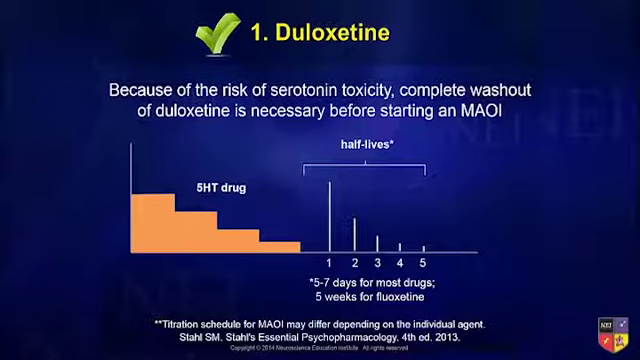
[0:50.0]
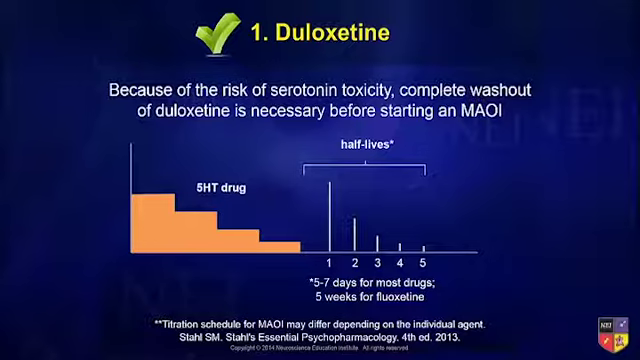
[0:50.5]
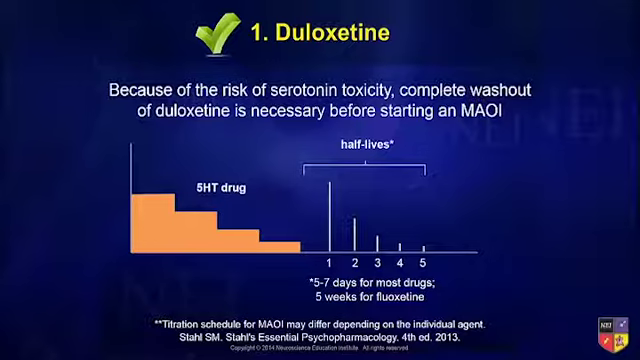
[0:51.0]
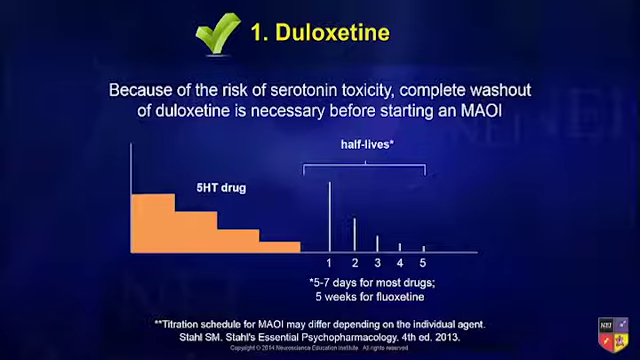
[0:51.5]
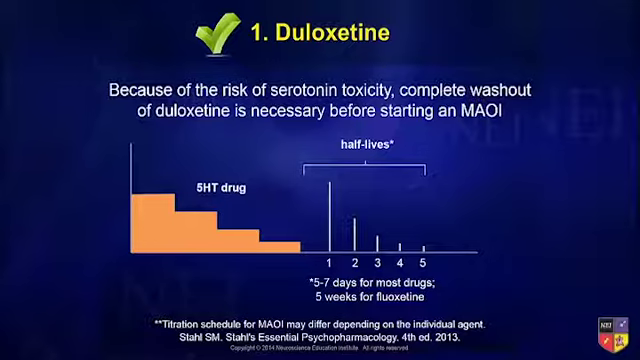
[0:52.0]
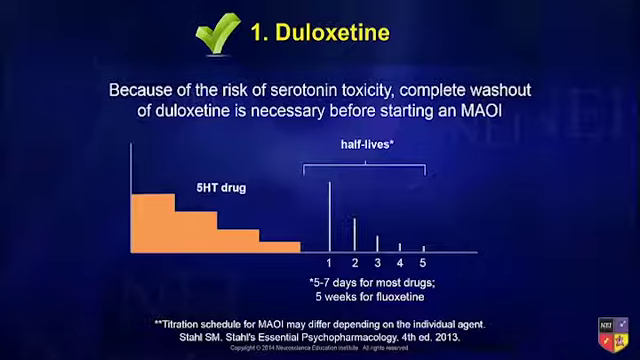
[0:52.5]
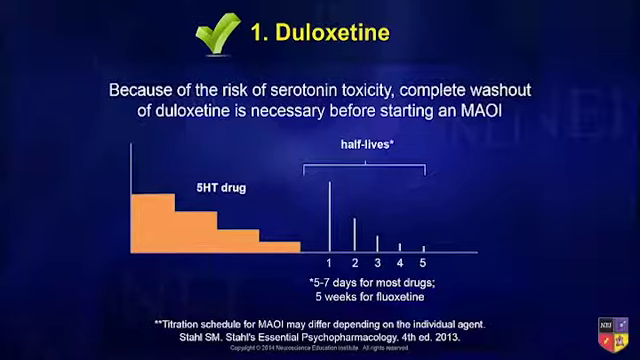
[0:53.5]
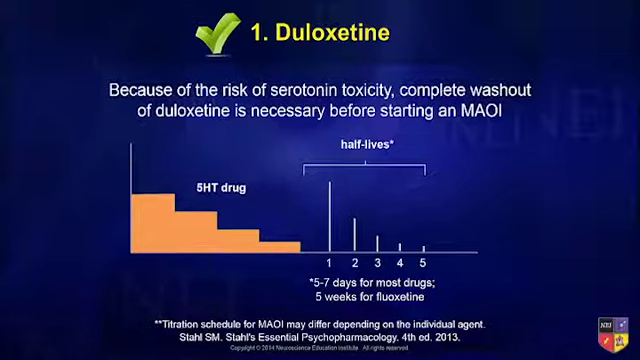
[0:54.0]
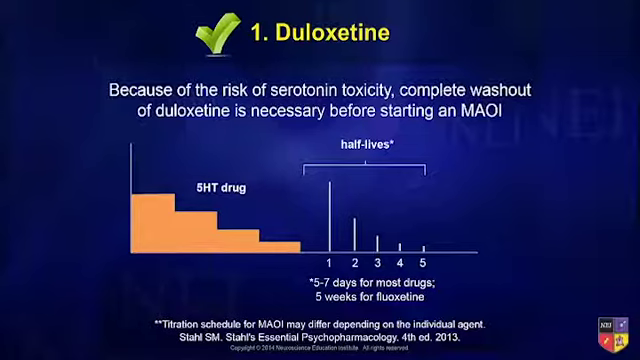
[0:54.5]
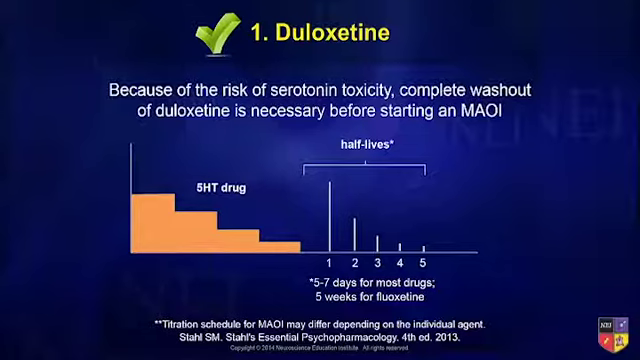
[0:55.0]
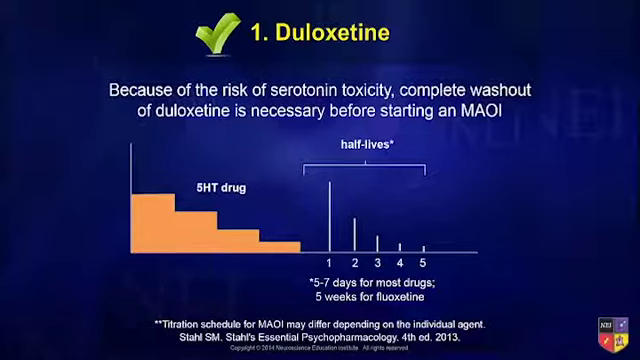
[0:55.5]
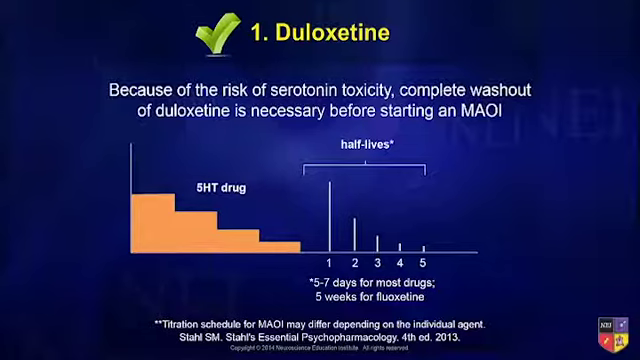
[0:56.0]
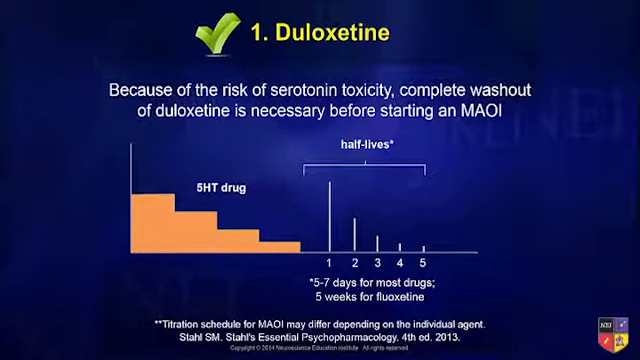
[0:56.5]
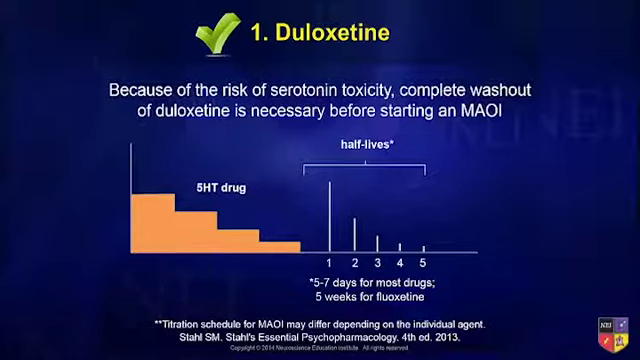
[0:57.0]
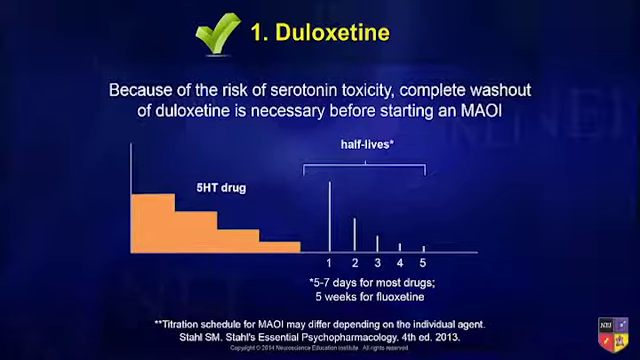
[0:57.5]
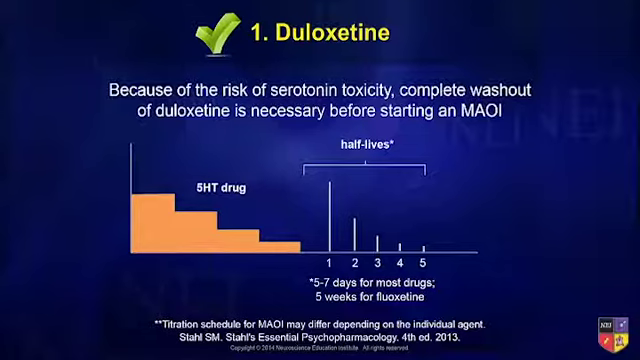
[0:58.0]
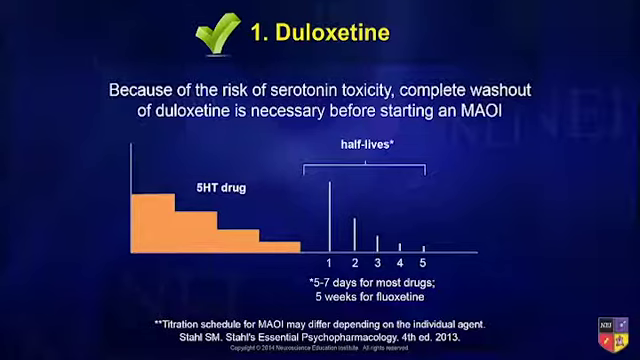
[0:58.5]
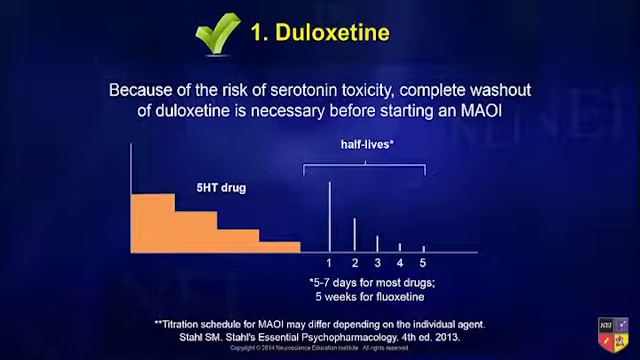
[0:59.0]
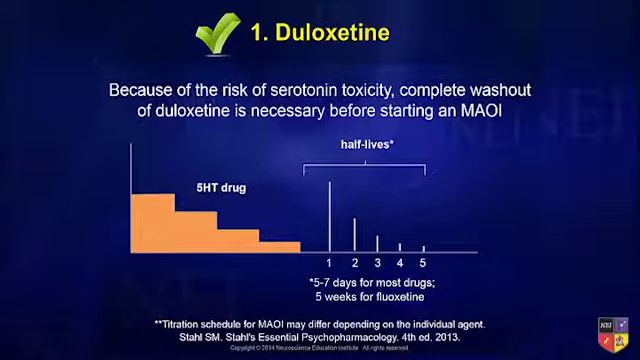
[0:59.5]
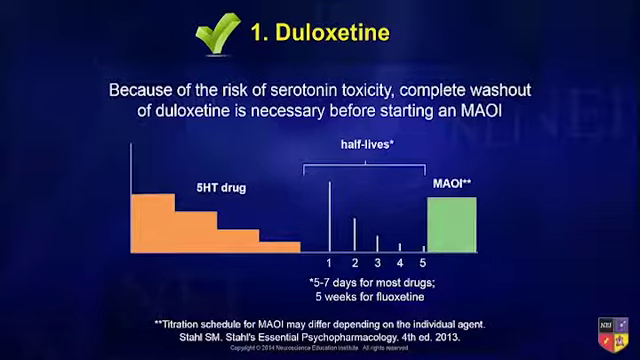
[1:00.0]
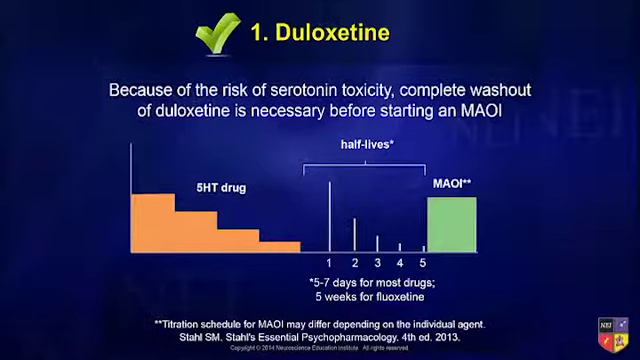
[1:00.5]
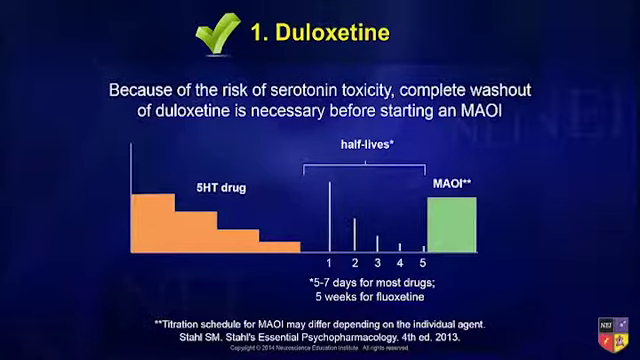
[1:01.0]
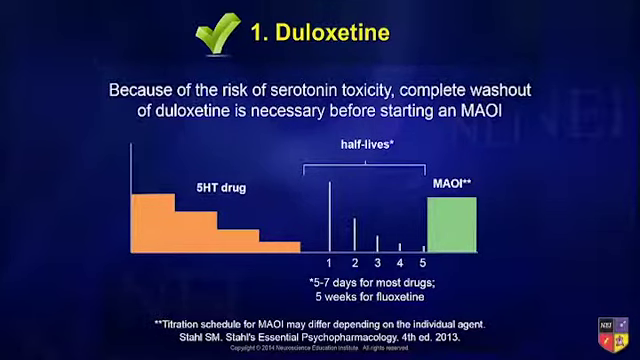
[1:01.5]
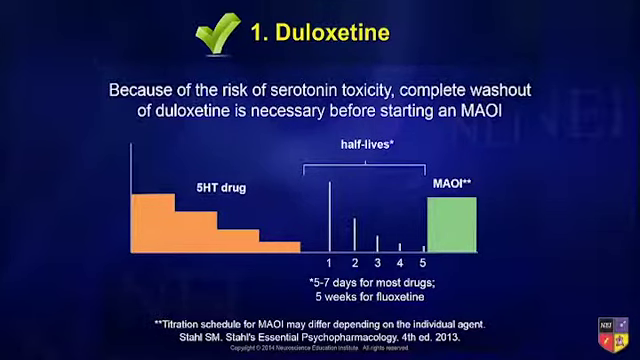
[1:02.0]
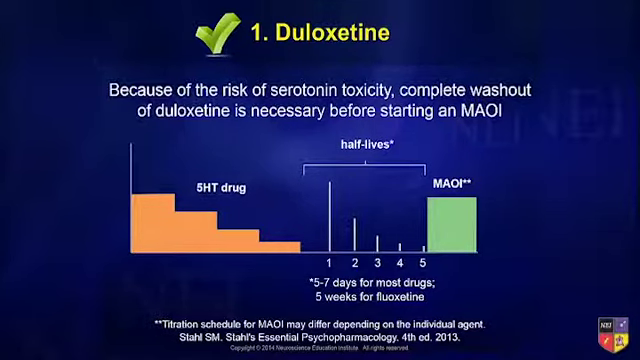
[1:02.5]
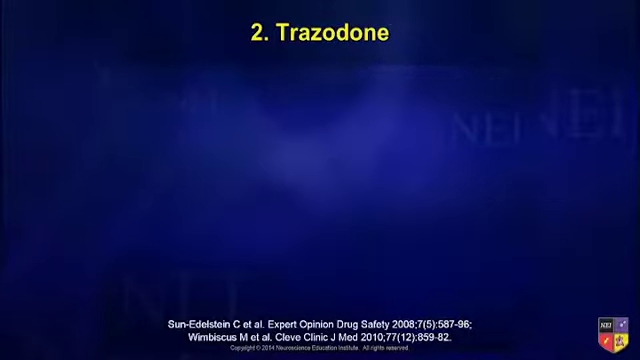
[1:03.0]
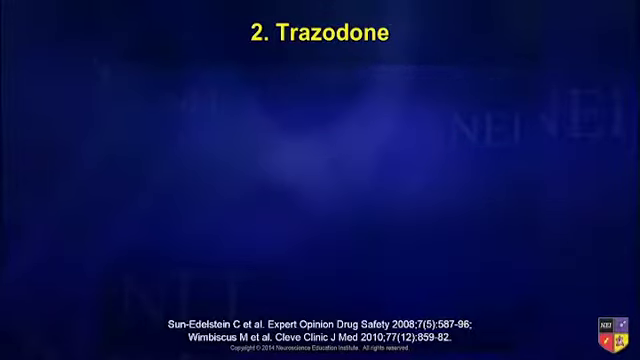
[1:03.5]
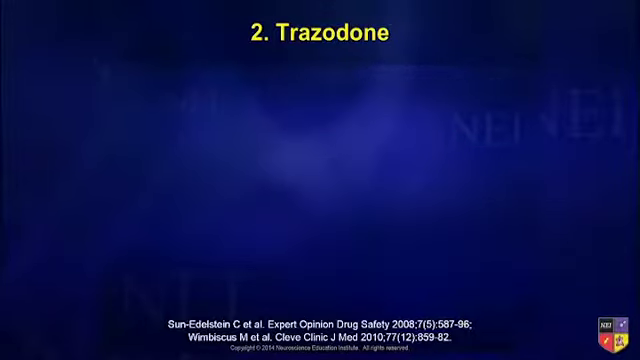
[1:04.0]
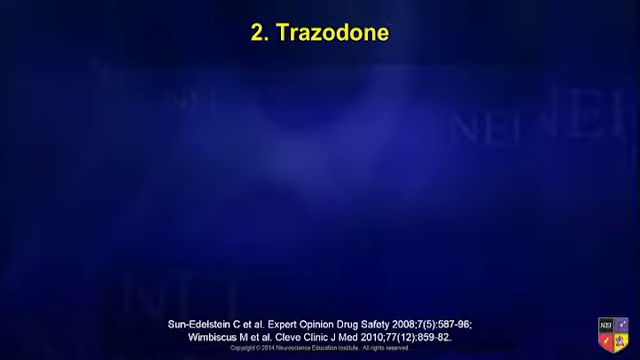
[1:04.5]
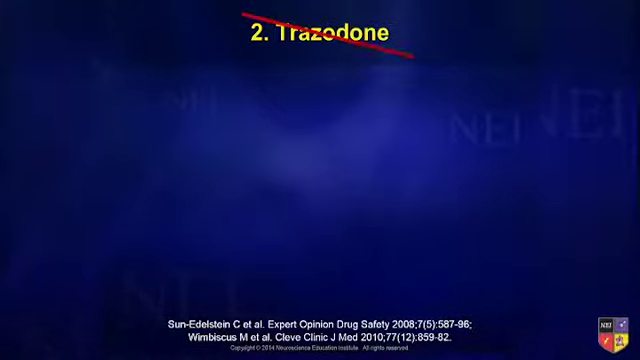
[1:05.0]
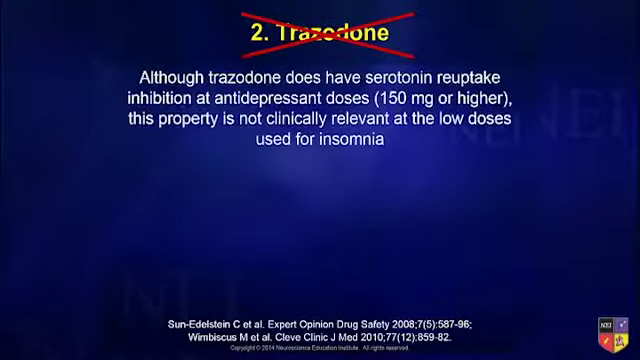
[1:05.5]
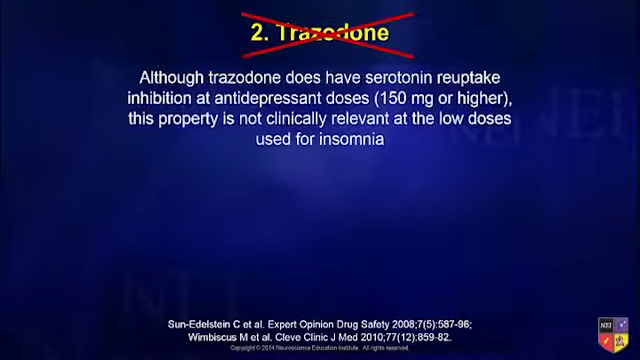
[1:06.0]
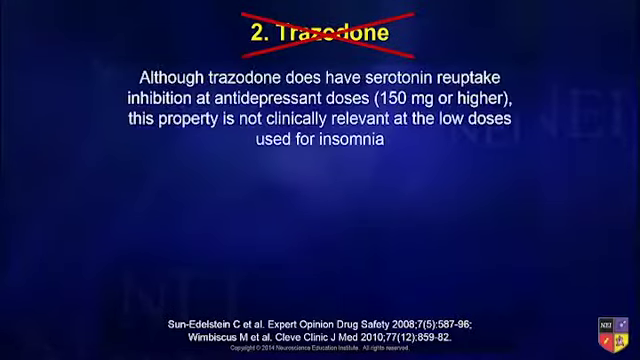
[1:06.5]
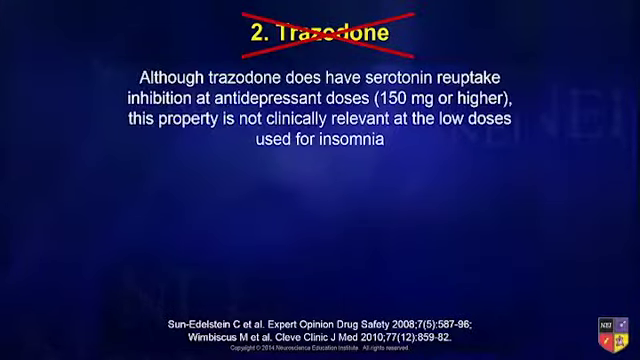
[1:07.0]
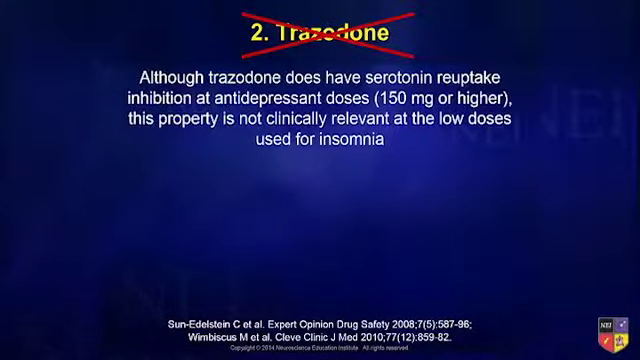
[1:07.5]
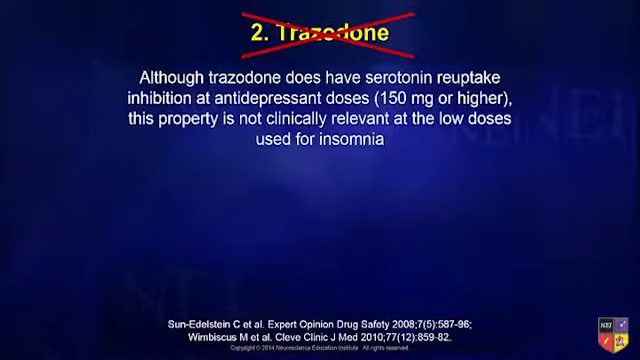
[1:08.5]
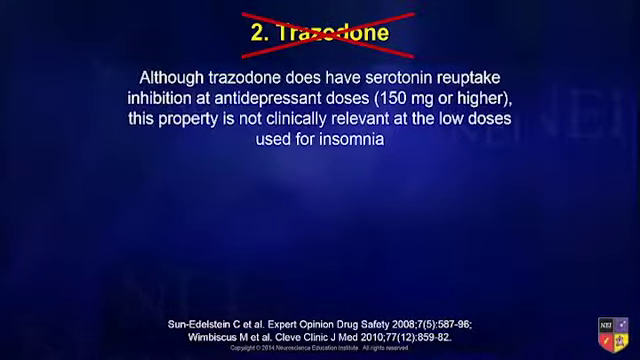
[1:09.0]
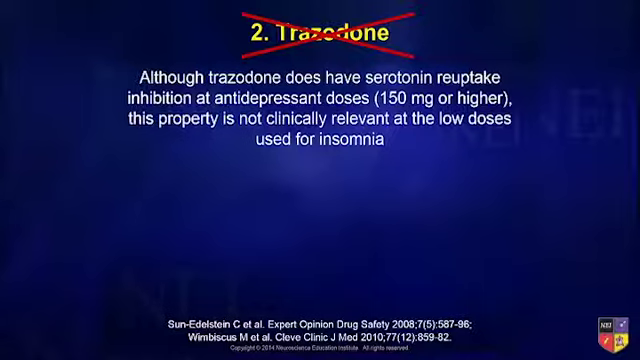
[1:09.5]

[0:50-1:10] The blue background remains, with the green tick and the yellow text "1 duloxetine" beside it, the white explanation underneath, the orange bar chart and the half-lives section, and white disclaimer text at the bottom. To the right of the half-lives chart, a green bar as high as the first orange bar appears next to the number 5, with the letters "MAOI" and two stars next to it. The video then transitions, with the same background, to a new screen with yellow text at the top reading "2 Trazodone". A red line appears from the top left corner and strikes through "trazodone" to the bottom right corner, then a second red line starts at the top right and strikes diagonally down through it to the bottom left. White text appears beneath the crossed-out word reading "although trazodone does have serotonin reuptake inhibition at antidepressant doses, 150 mg or higher, this property is not clinically relevant at the low doses used for insomnia."